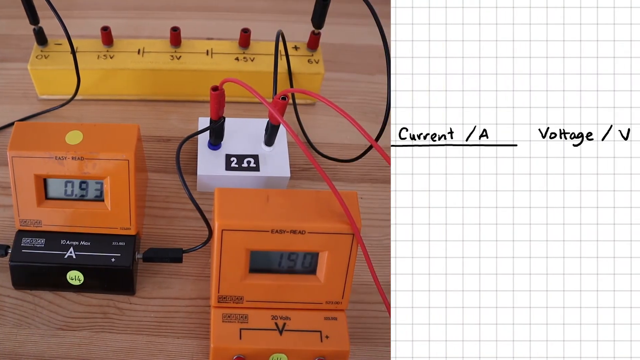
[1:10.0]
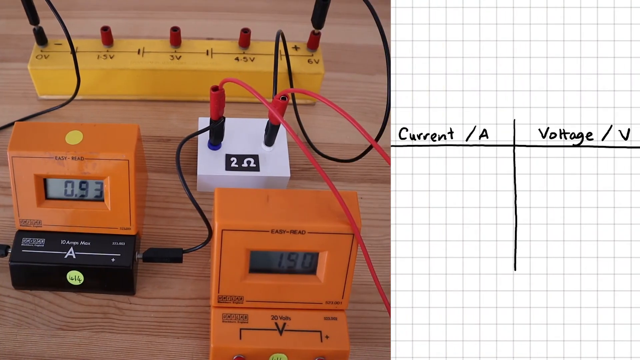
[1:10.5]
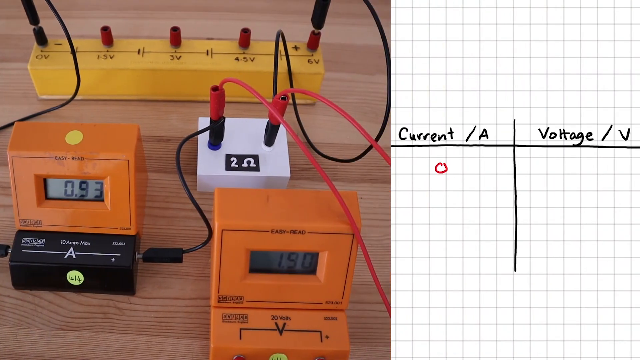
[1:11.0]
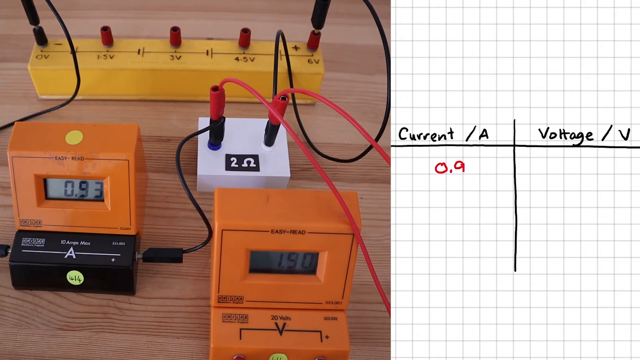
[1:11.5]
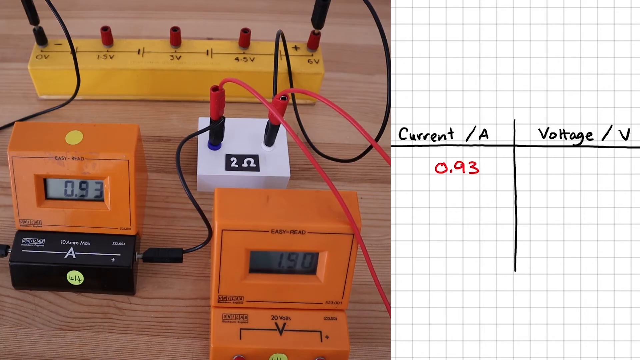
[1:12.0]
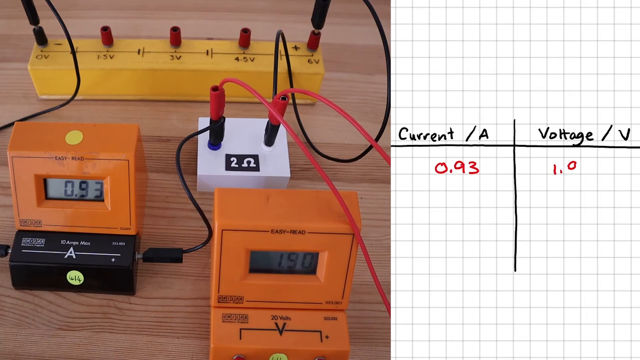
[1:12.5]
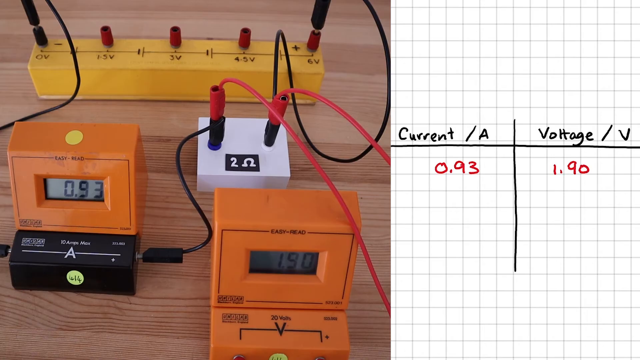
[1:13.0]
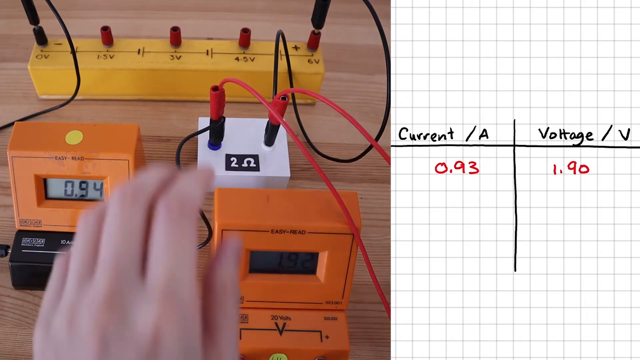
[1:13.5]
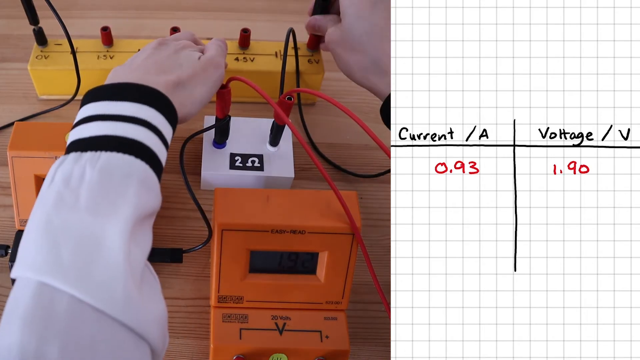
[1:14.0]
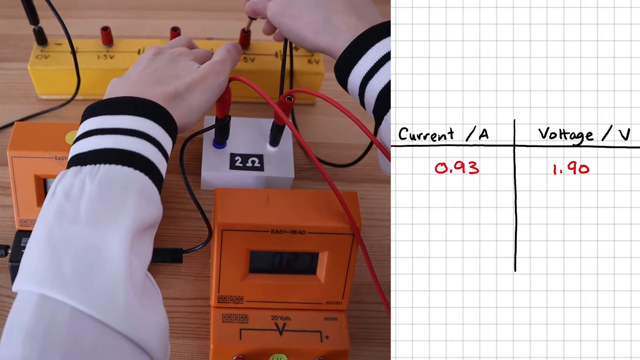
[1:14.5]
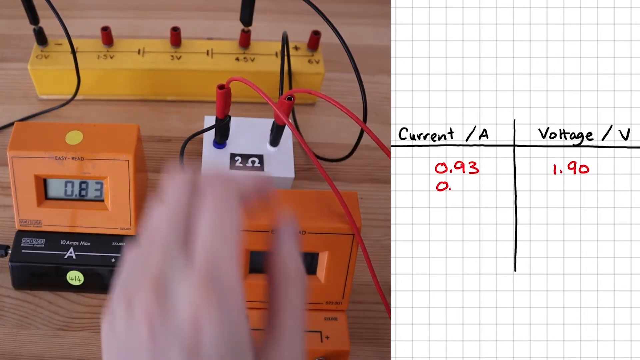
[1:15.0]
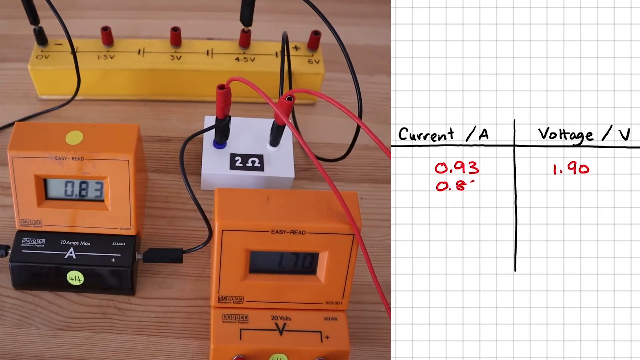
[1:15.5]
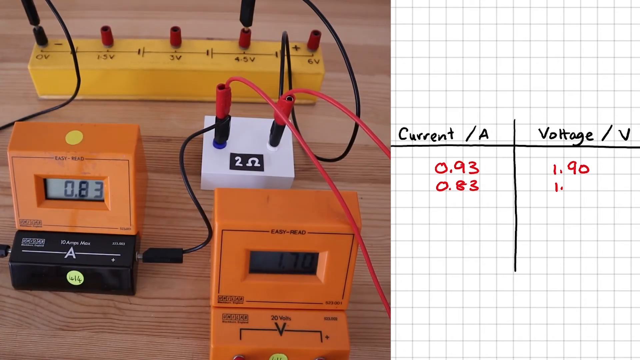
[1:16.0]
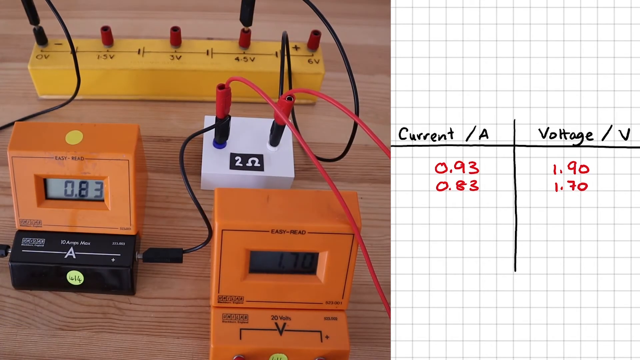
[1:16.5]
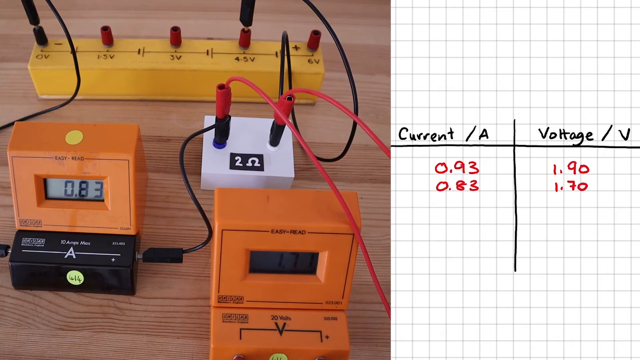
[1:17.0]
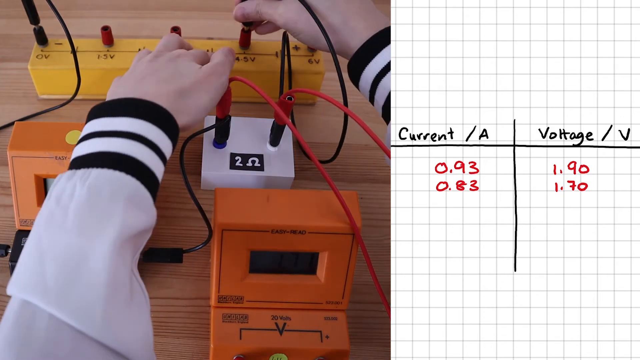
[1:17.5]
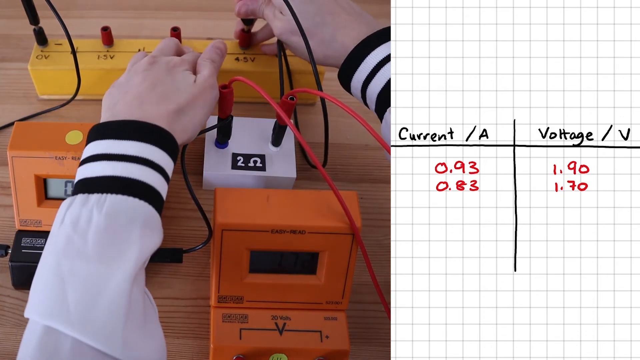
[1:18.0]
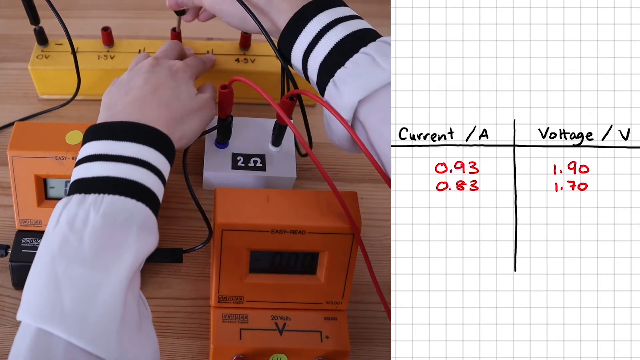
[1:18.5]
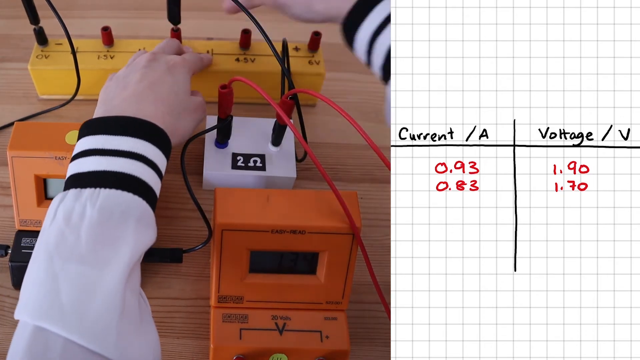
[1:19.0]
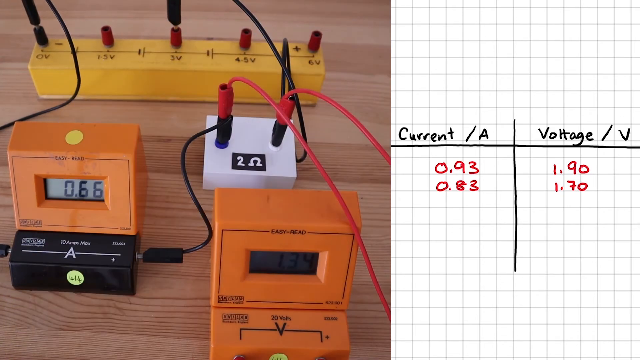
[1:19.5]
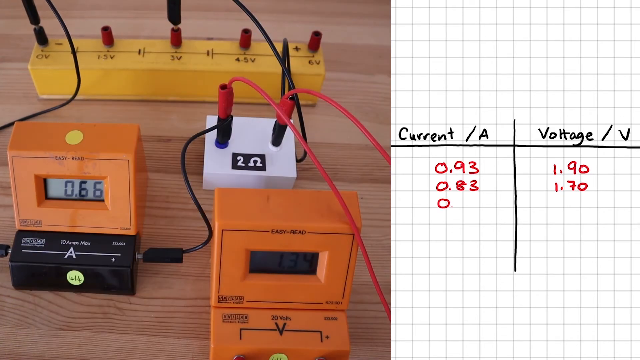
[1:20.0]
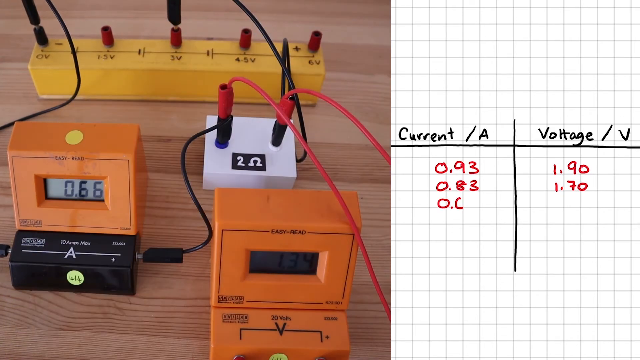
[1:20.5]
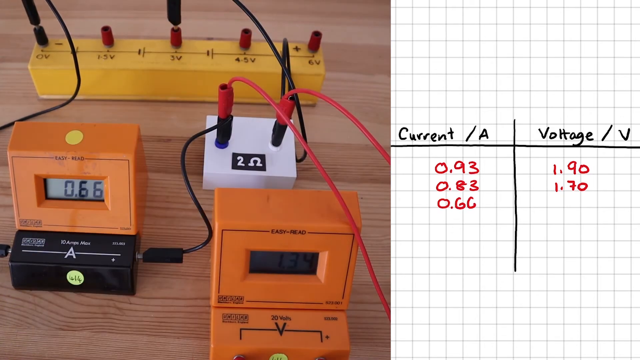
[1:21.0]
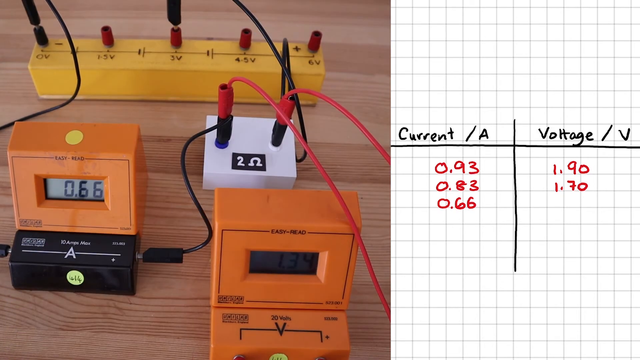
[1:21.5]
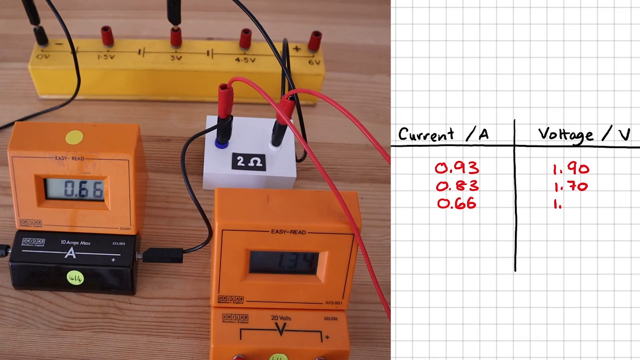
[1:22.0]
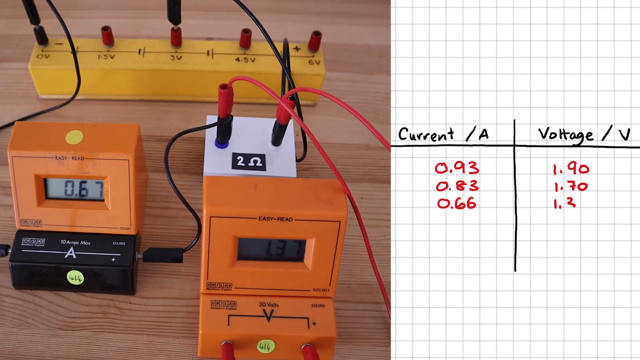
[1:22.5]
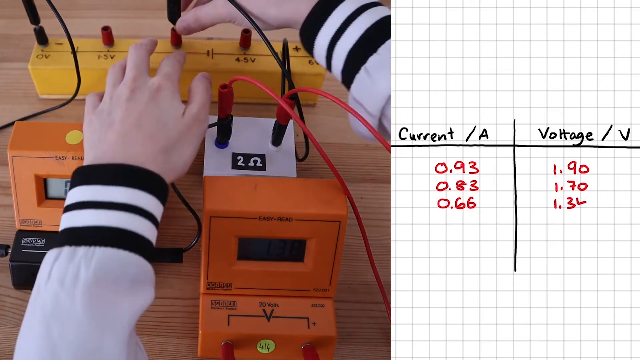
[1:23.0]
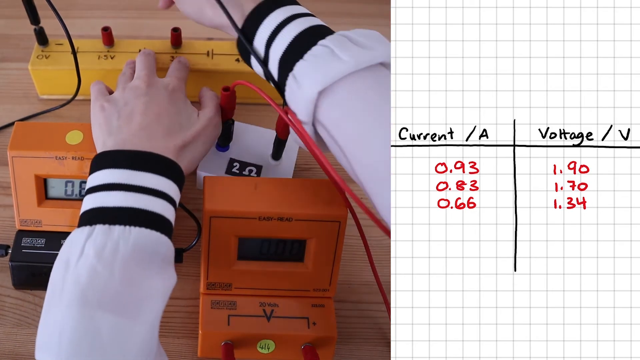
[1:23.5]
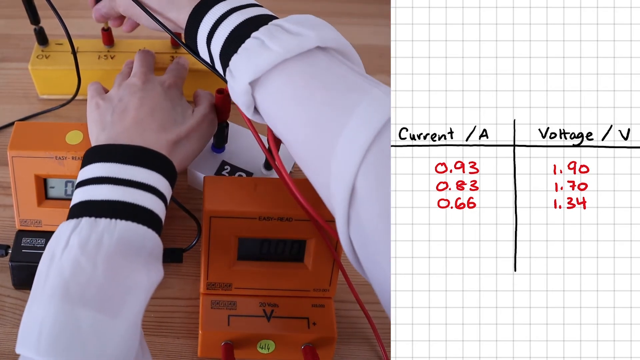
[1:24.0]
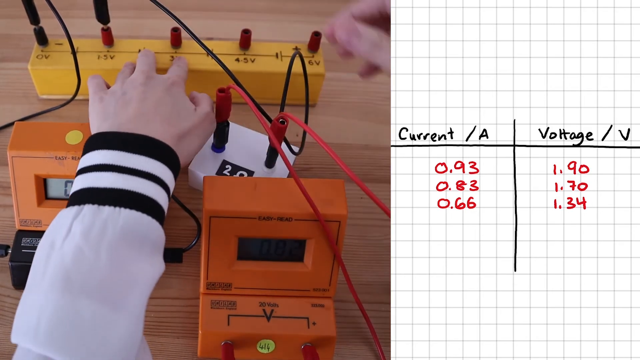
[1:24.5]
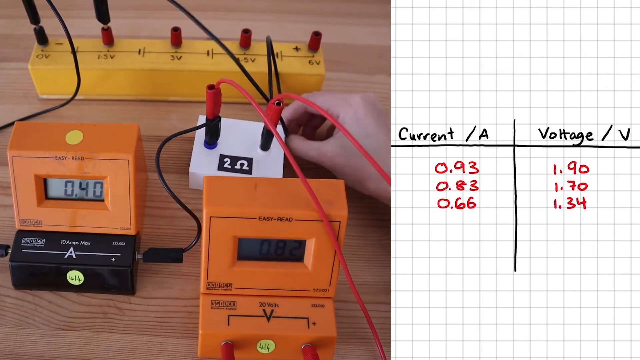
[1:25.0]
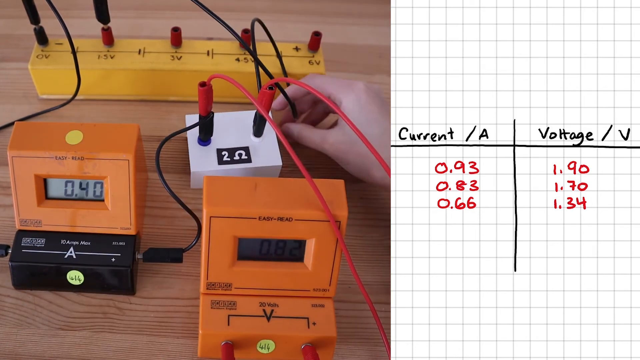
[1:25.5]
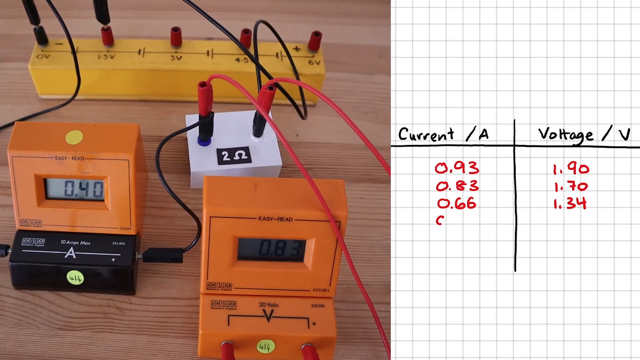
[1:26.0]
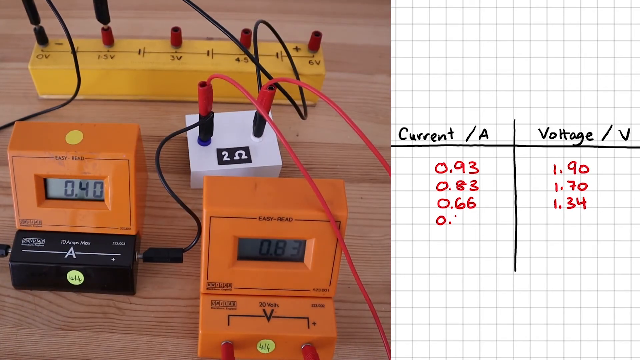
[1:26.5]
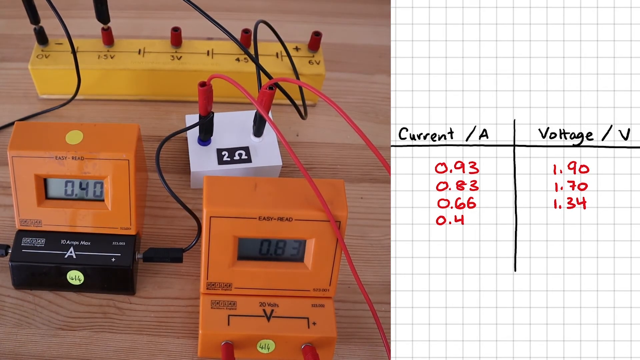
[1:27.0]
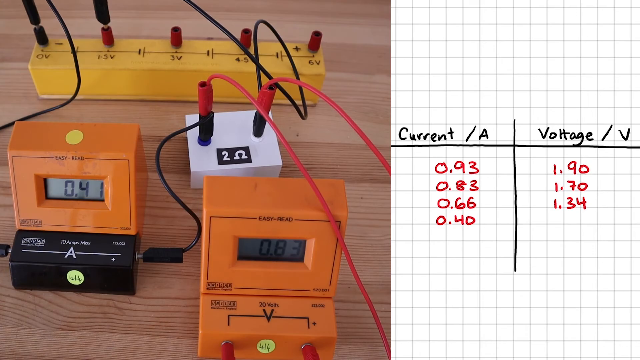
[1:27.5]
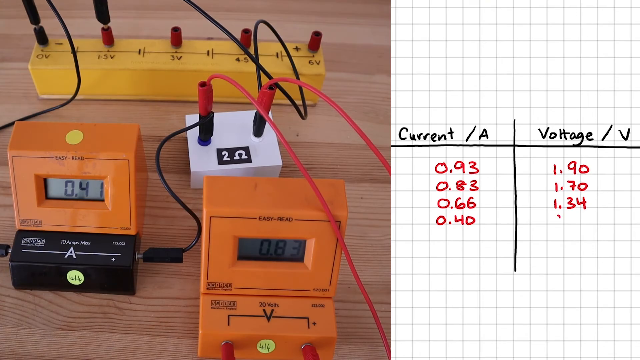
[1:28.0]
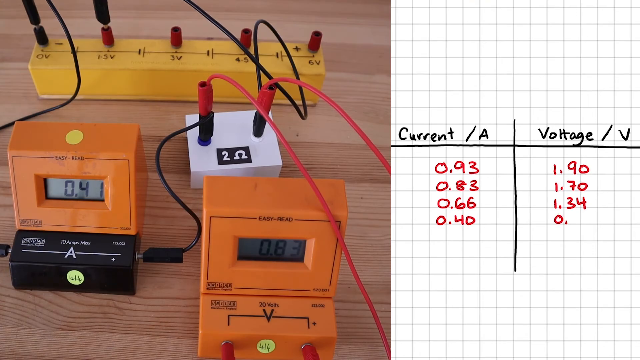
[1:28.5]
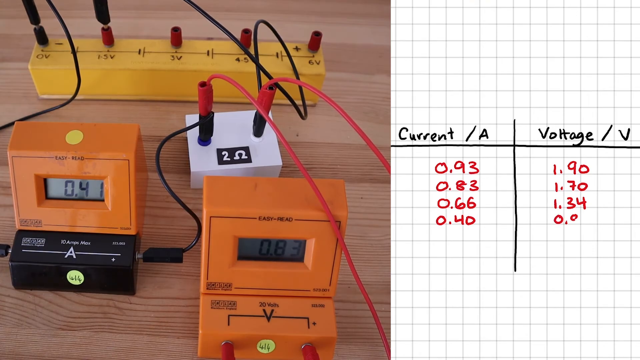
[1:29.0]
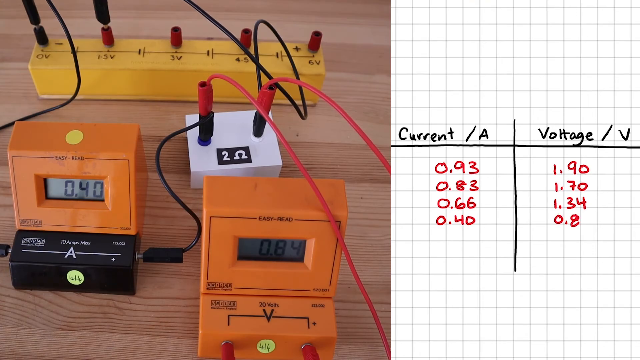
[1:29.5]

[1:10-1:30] The left side of the screen continues to show the circuit, while the right side shows a graph-paper-like design on which a table is being drawn, with "current / A" on one side and "voltage / V" on the other. In red, 0.93 is written under current and 1.90 under voltage. On the left, one of the plug-ins is moved, and a different reading is written in the chart on the right: 0.83 under current and 1.70 under voltage. Another adjustment is made to the circuit, and 0.66 and 1.34 are written. After a further adjustment, 0.40 is written under current and 0.83 under voltage.